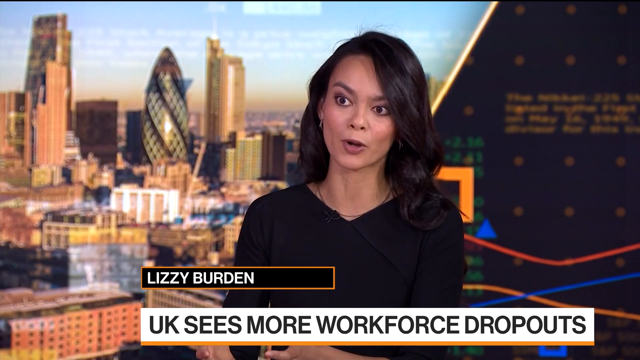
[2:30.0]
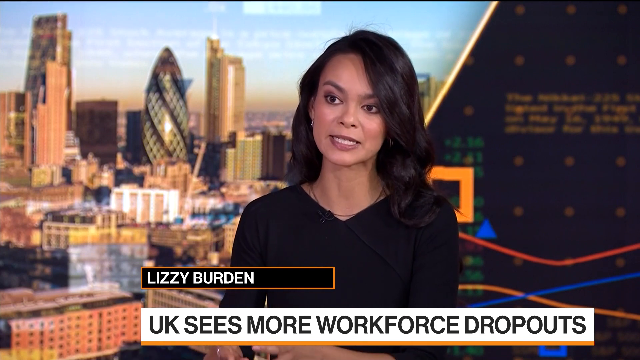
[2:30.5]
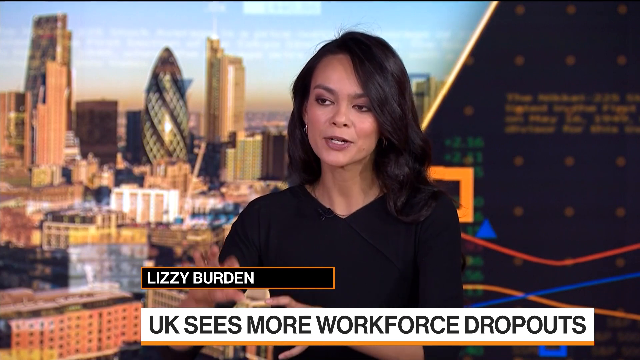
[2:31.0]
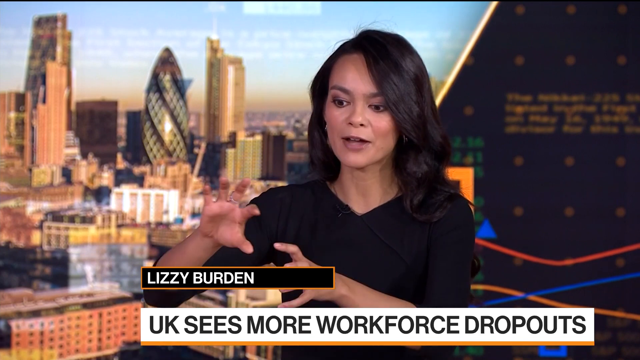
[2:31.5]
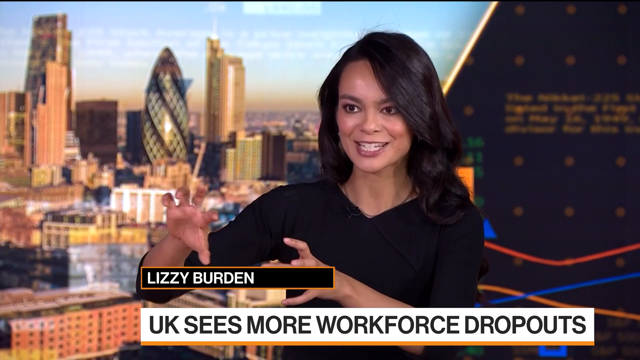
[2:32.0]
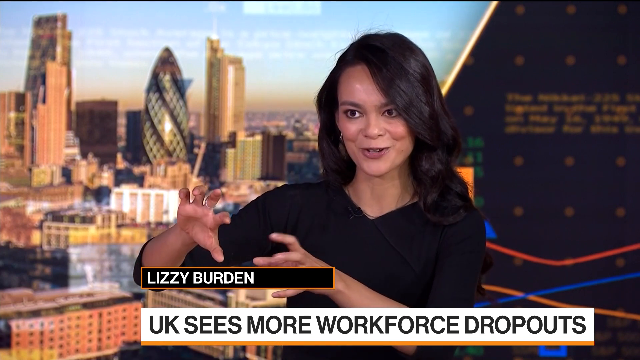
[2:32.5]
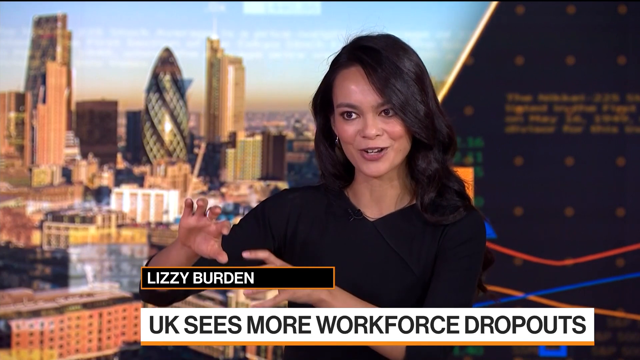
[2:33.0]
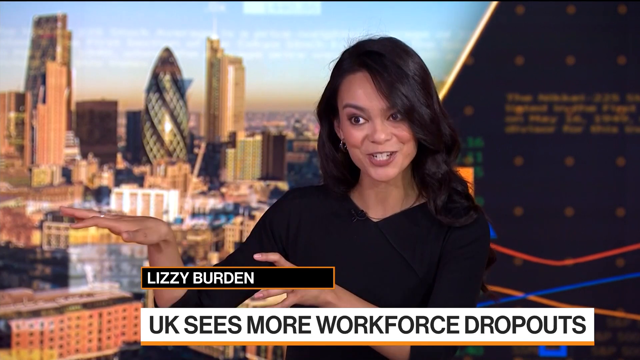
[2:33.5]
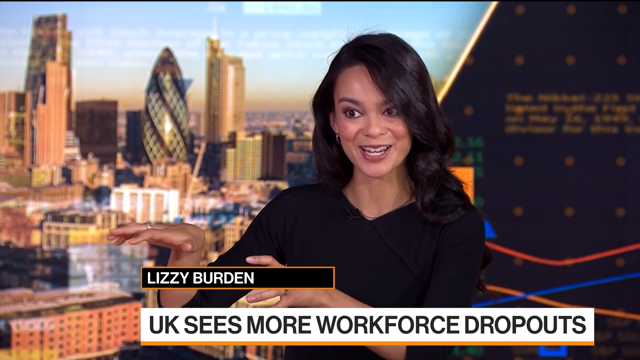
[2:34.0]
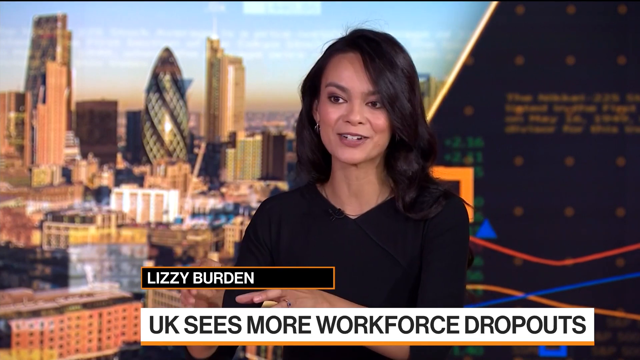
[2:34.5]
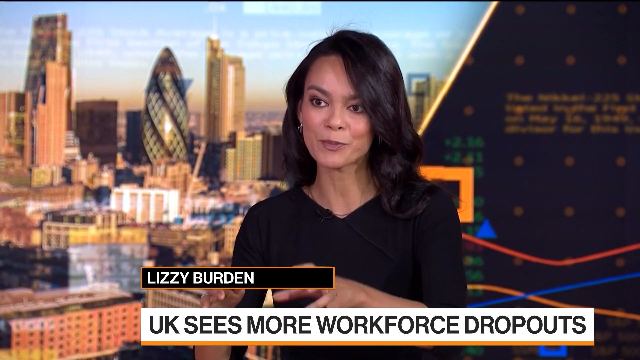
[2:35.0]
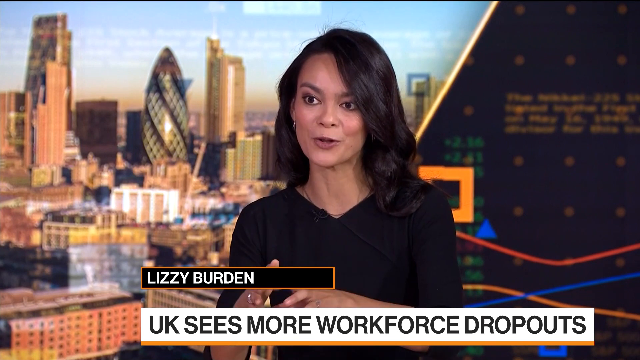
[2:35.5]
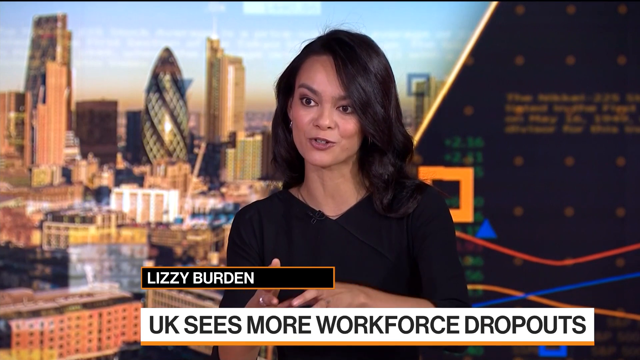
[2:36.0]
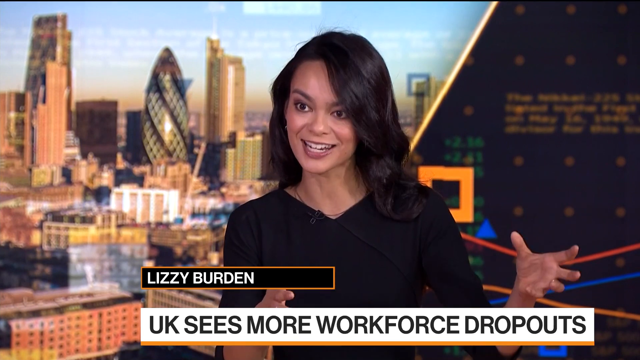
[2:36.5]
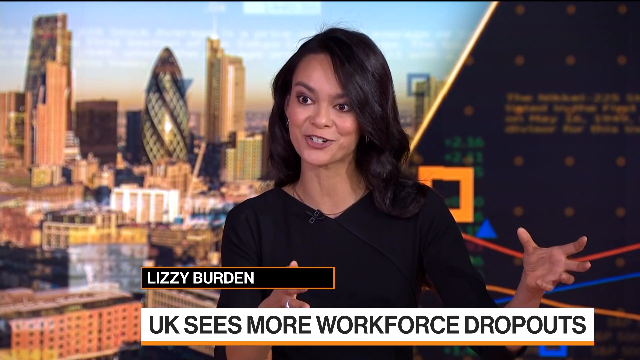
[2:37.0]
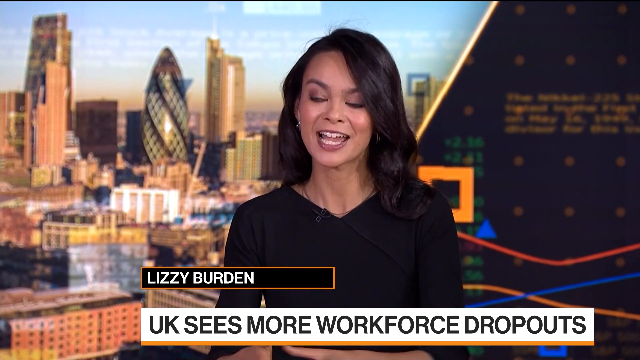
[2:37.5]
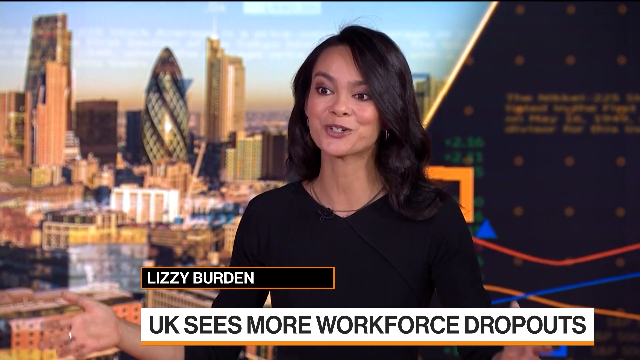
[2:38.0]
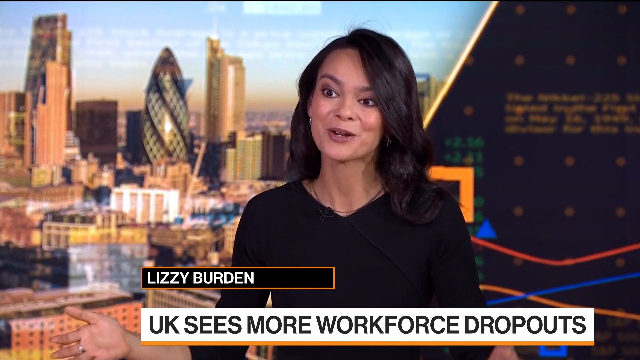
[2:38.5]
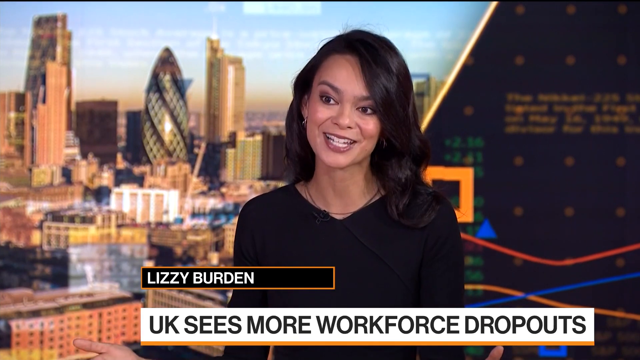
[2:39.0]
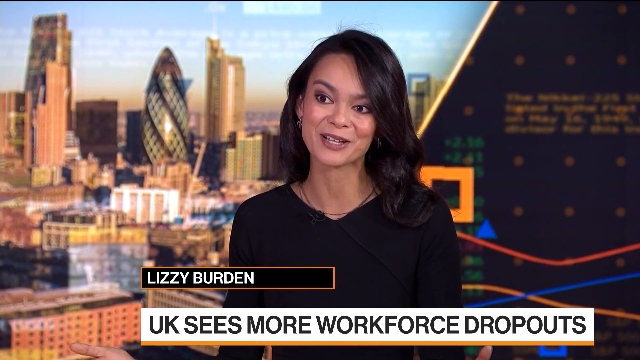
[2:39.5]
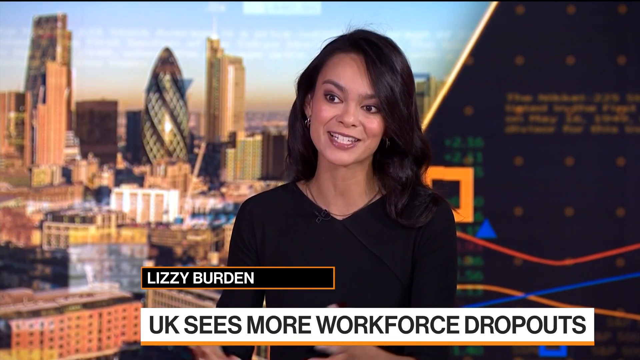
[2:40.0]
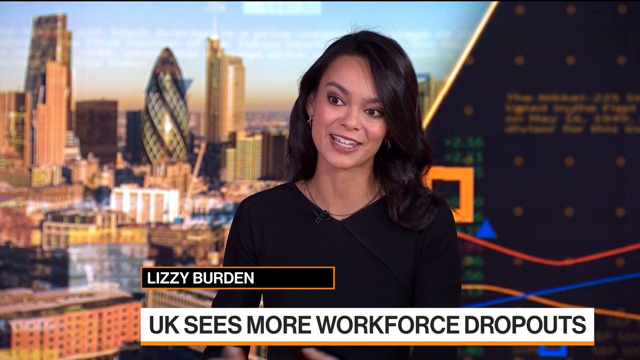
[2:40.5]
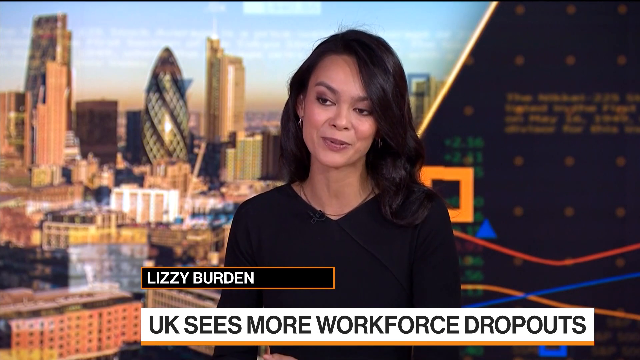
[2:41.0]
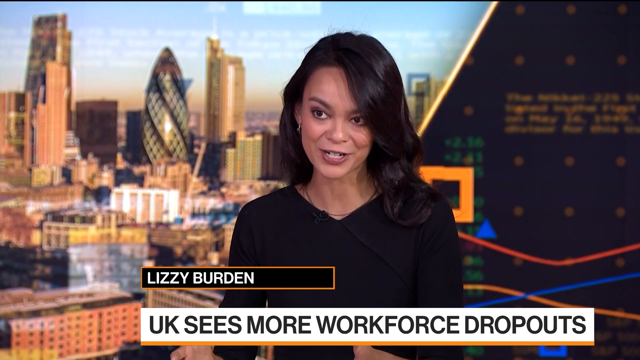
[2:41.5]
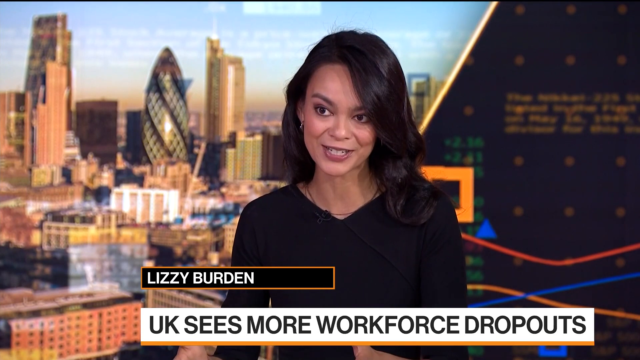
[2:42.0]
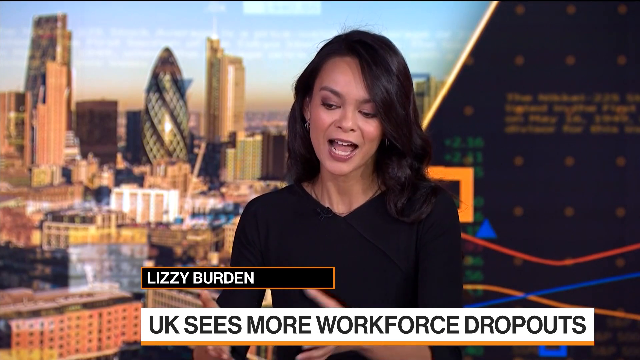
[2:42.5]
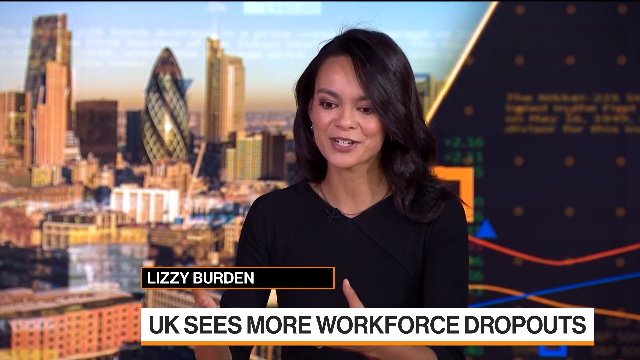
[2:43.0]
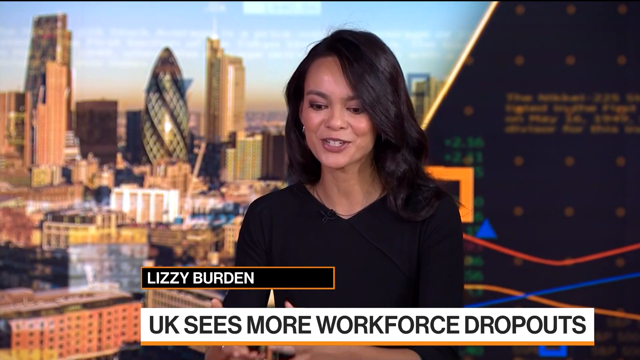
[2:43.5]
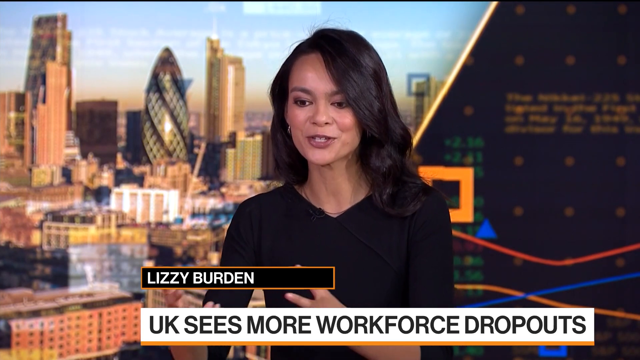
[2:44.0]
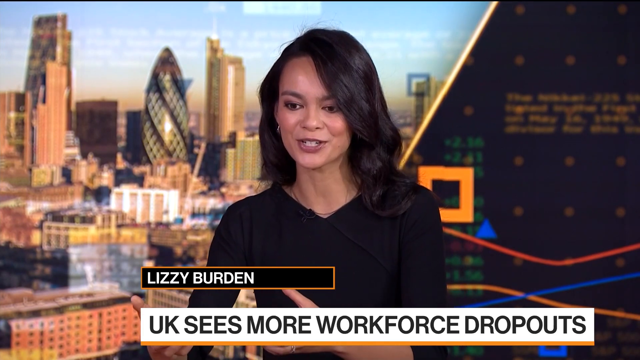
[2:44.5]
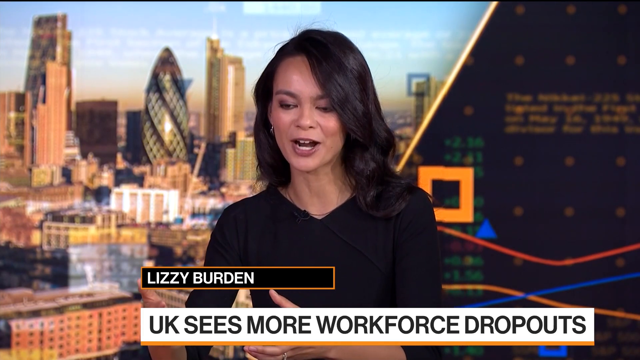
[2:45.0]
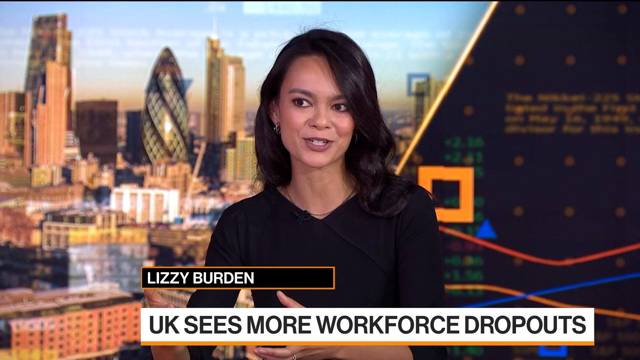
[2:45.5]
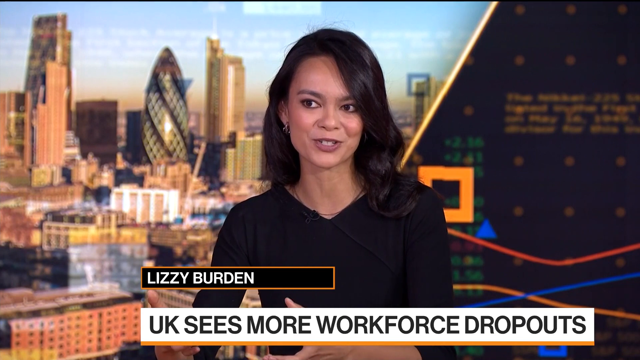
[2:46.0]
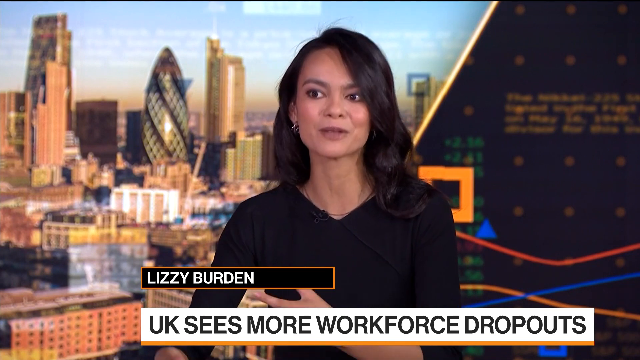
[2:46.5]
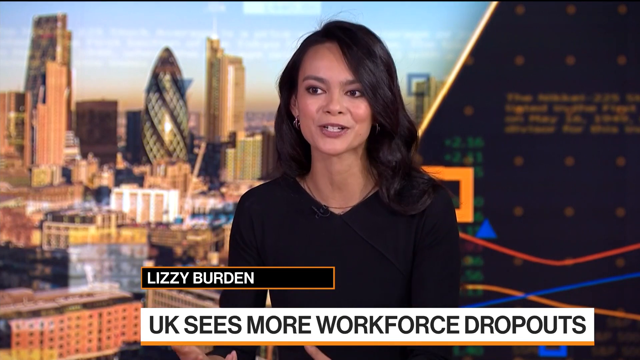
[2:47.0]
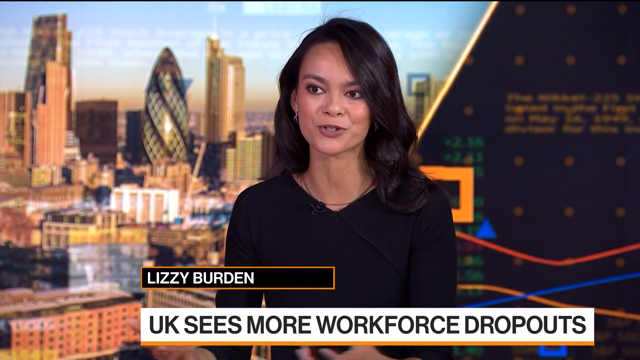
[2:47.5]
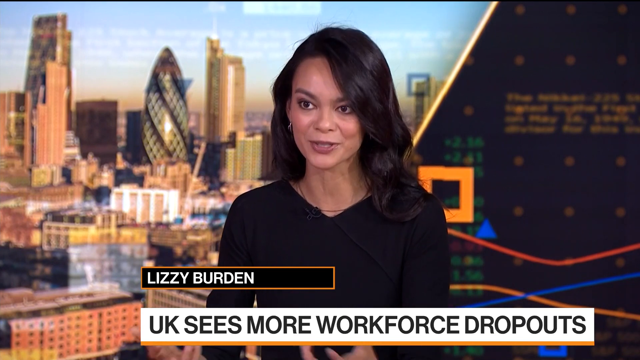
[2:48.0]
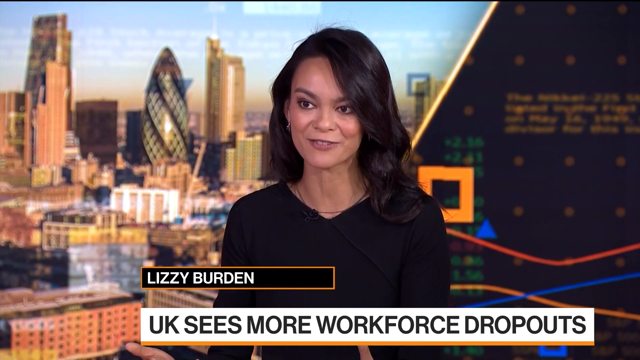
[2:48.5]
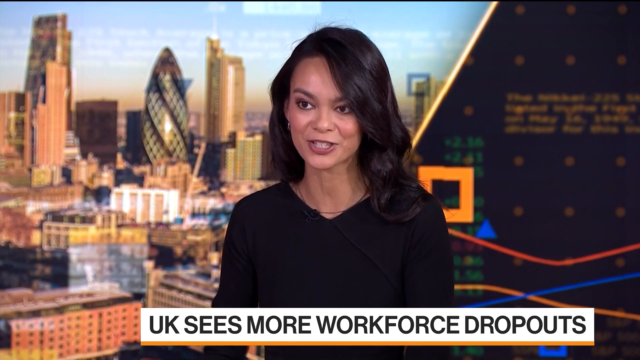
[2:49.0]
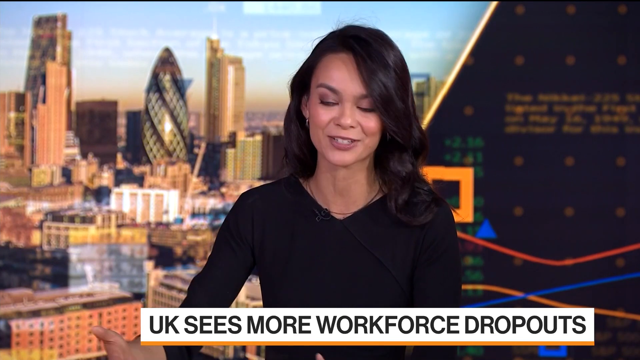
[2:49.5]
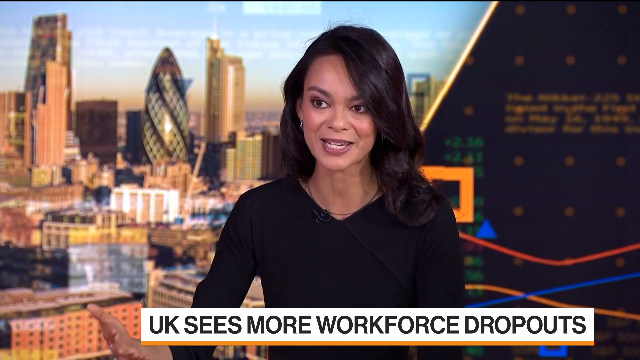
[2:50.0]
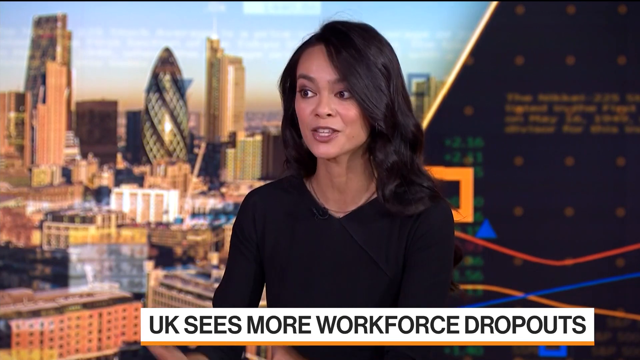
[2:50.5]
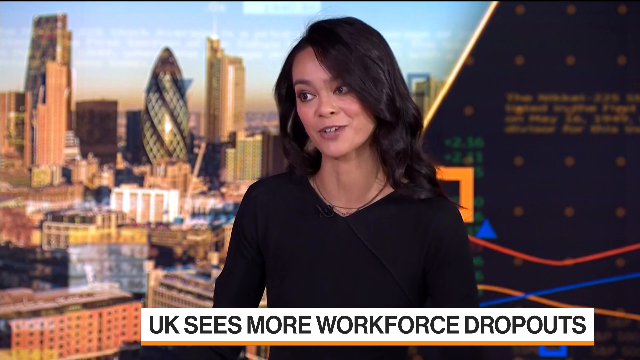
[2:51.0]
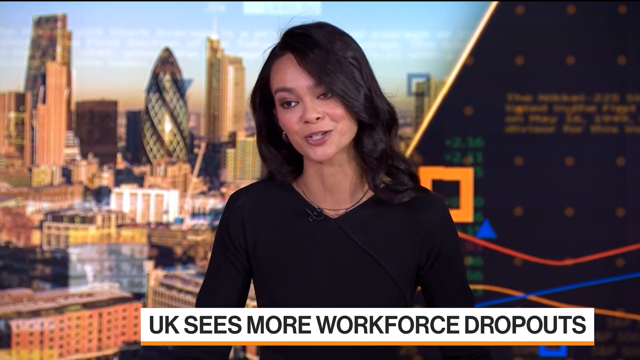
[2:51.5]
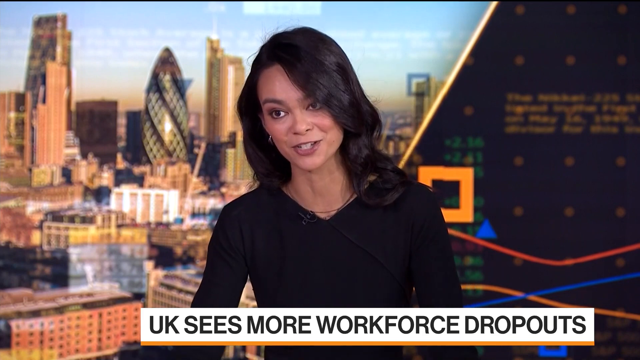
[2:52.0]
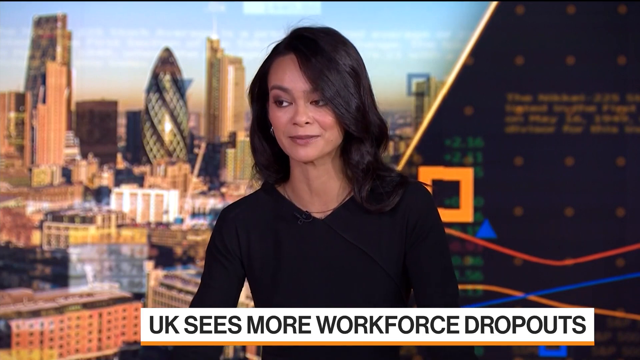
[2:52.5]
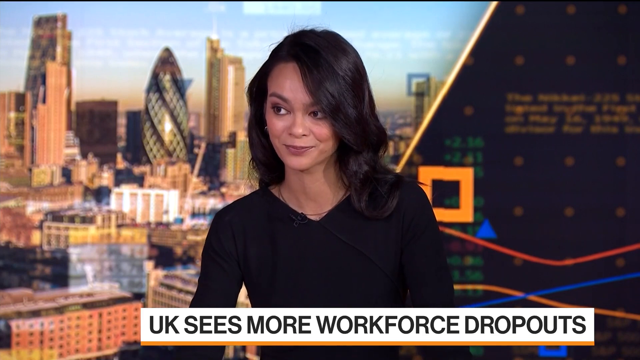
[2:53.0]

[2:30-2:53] Lizzie Burden is in the center of the screen, talking about stories affecting the UK, waving her hands as she speaks to emphasize her points. The text "UK sees more workforce dropouts" is still on screen.